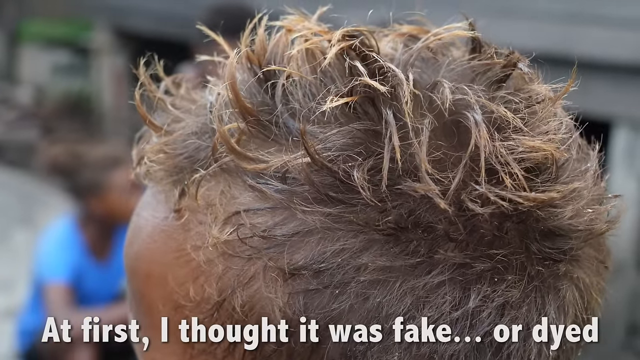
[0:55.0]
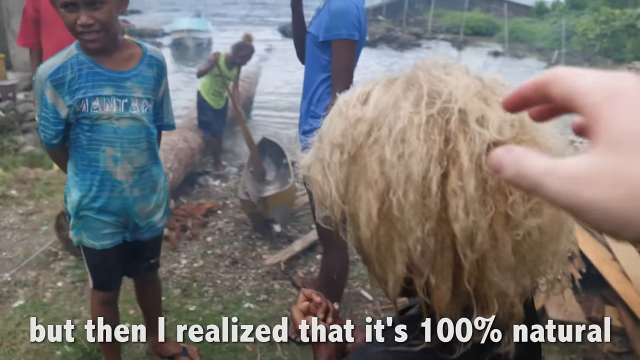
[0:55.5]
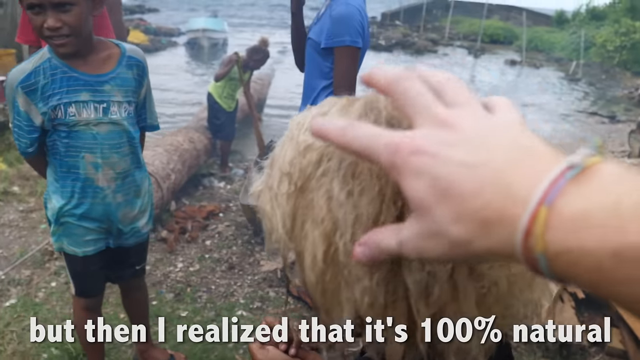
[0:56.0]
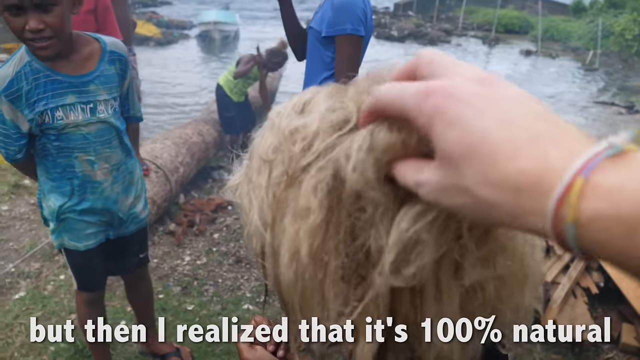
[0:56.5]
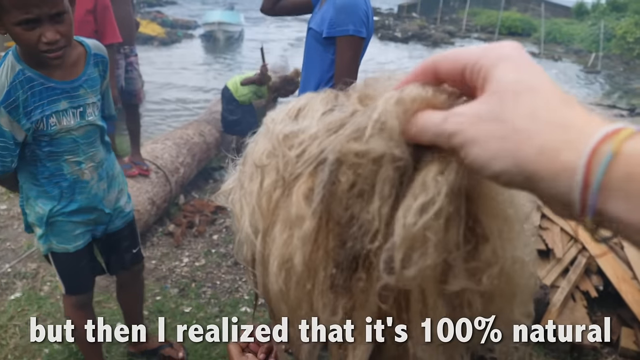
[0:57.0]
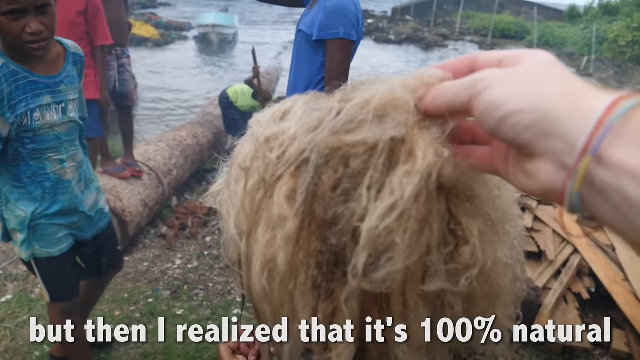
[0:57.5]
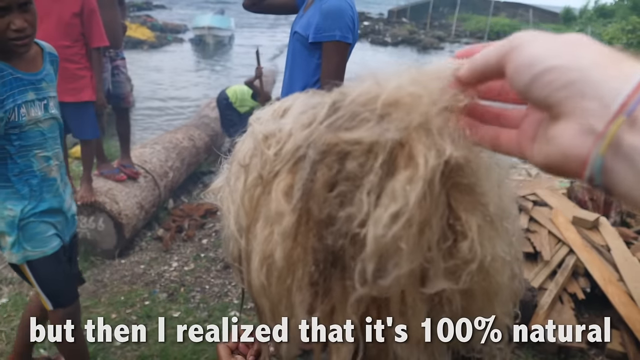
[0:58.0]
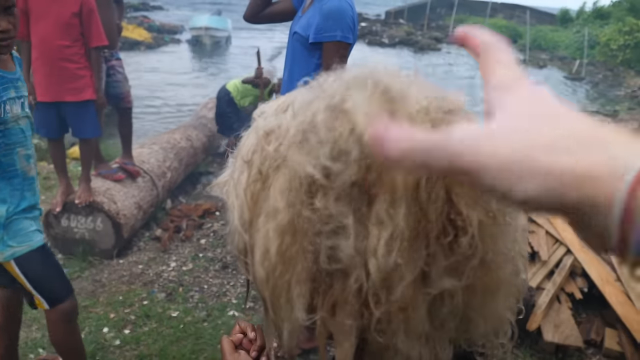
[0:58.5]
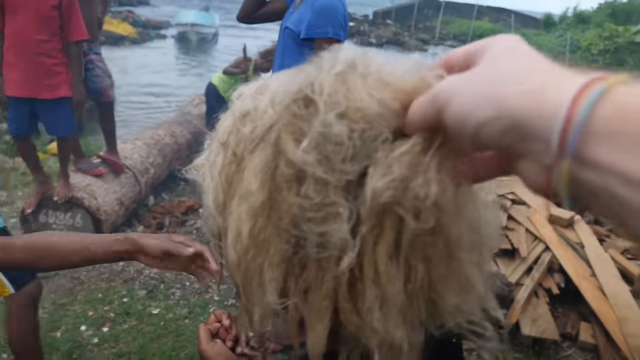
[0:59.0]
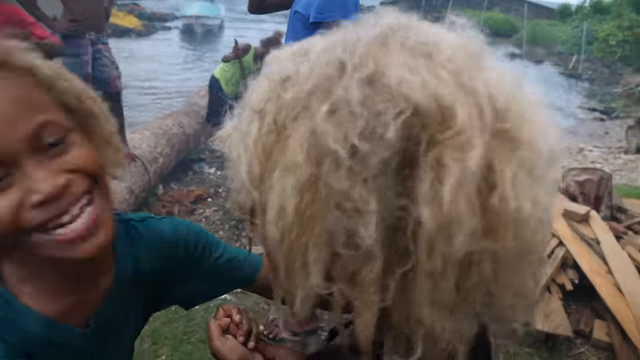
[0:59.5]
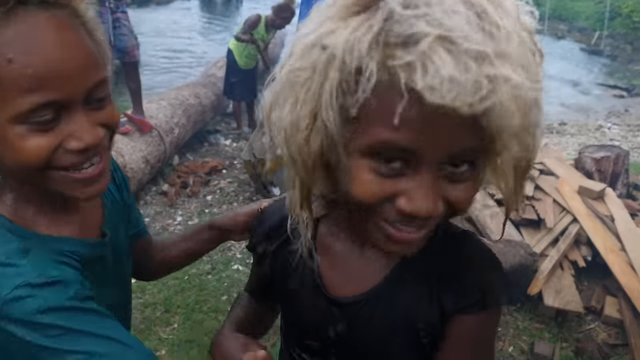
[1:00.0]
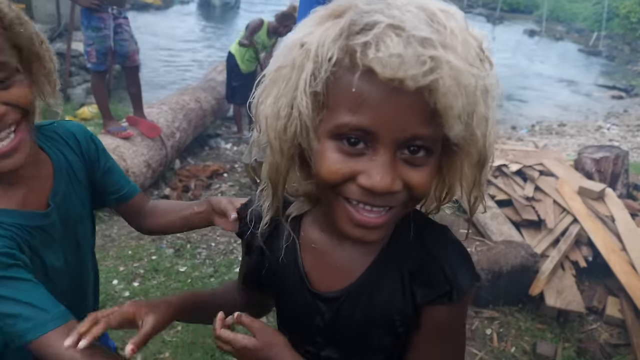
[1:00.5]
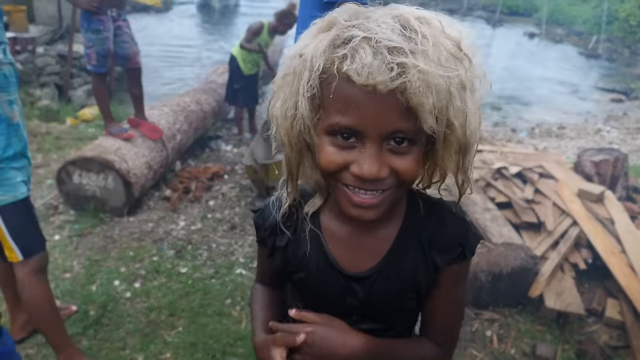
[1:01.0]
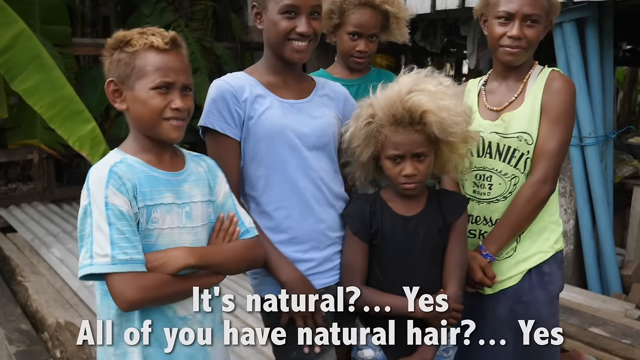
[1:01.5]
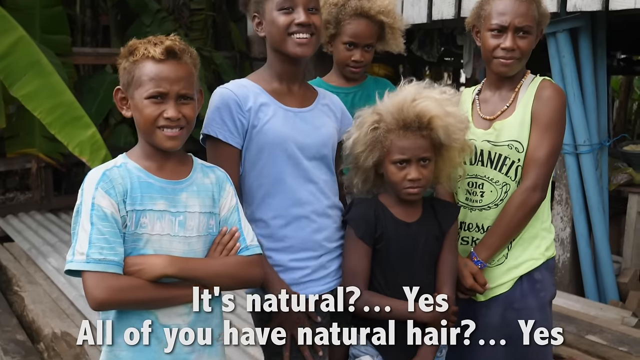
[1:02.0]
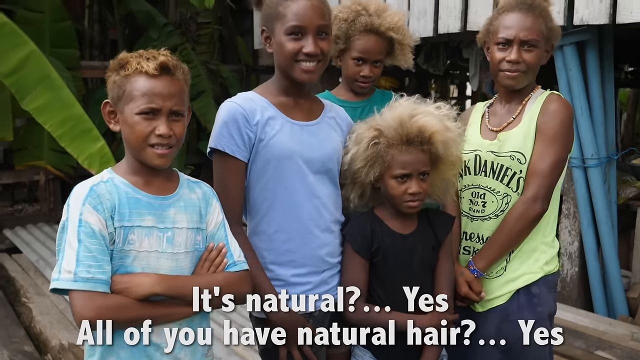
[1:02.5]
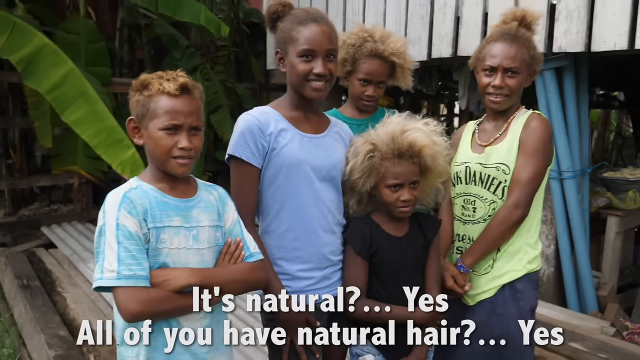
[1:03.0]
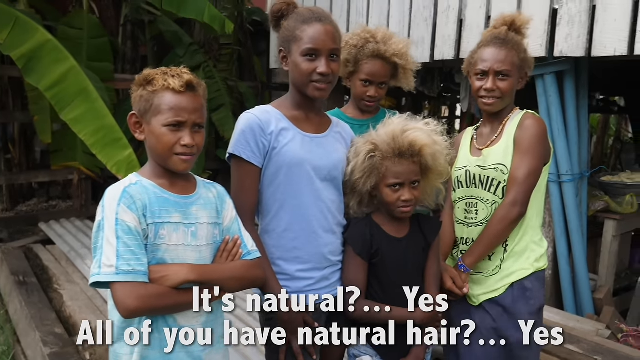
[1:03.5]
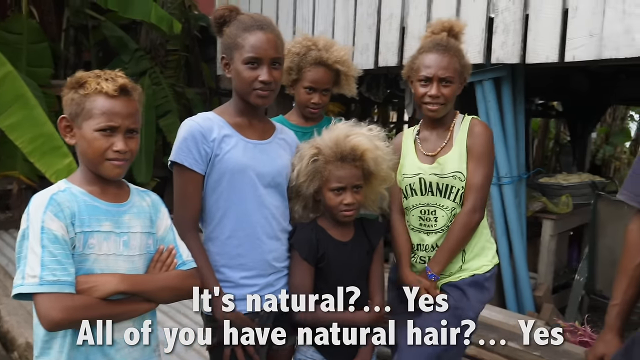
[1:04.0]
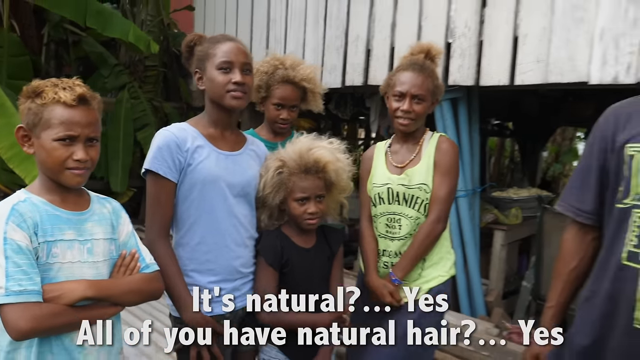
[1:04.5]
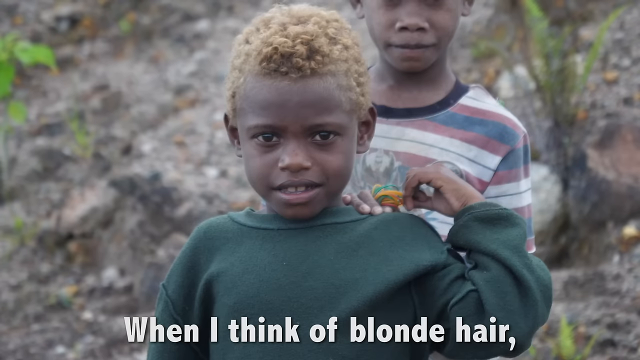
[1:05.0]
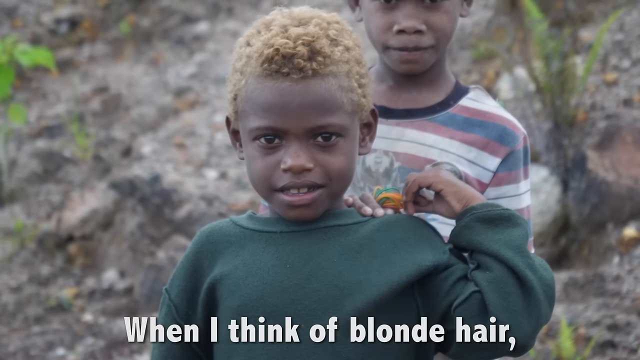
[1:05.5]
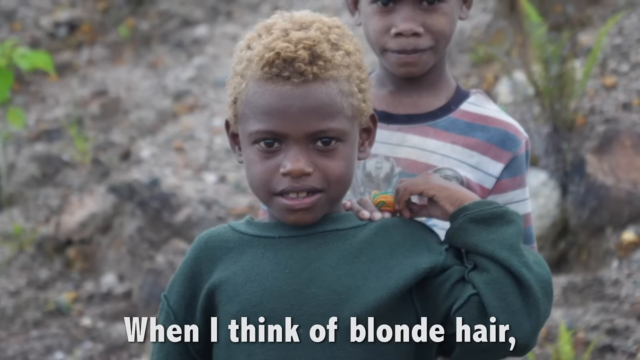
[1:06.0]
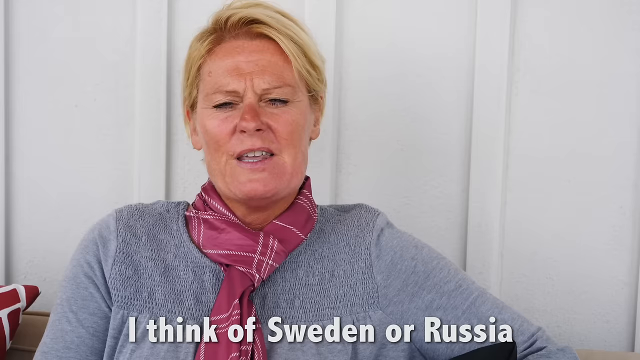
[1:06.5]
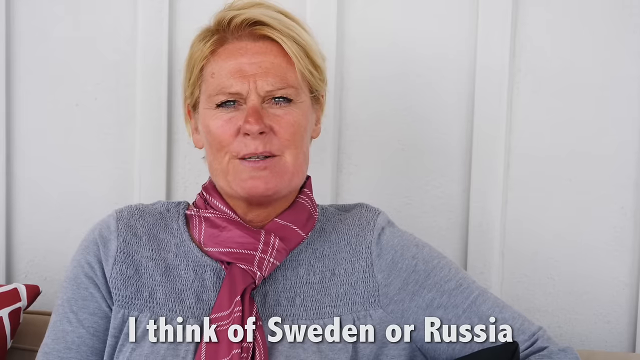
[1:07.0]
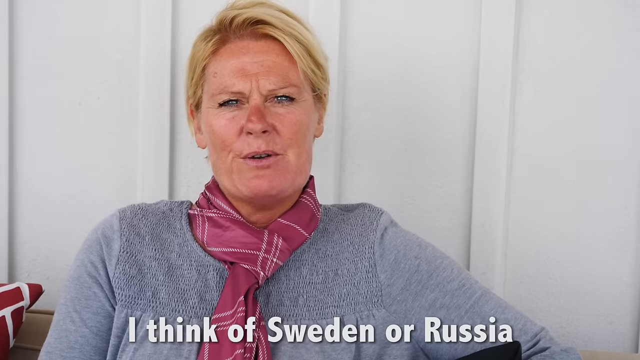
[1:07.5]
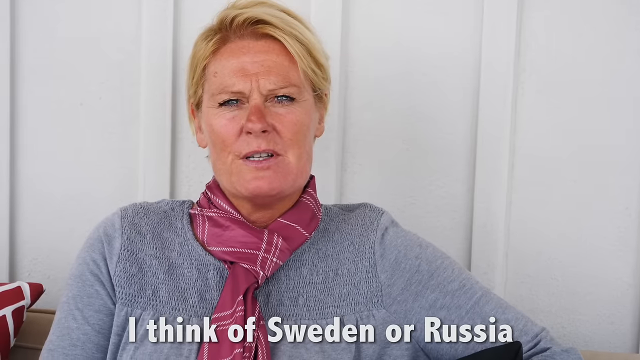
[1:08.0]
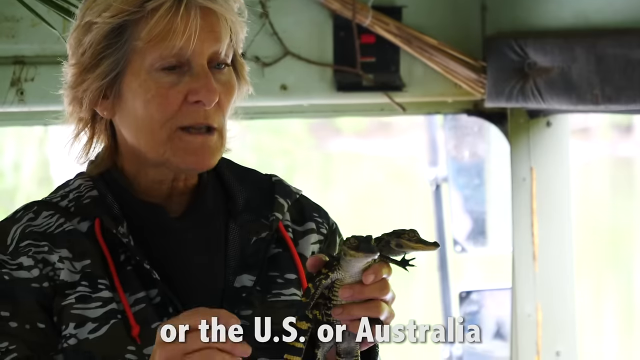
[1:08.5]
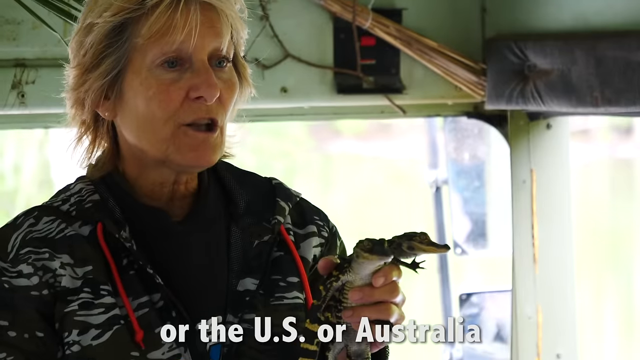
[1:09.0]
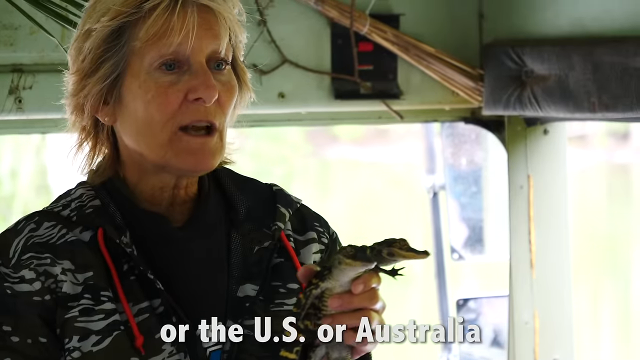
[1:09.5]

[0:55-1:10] The man touches the locals' blonde hair, apparently in total awe. The locals are dark skinned, and their hair is straight and blonde; some of the men have it too. Two people then talk, and a woman holds a lizard in her hand.